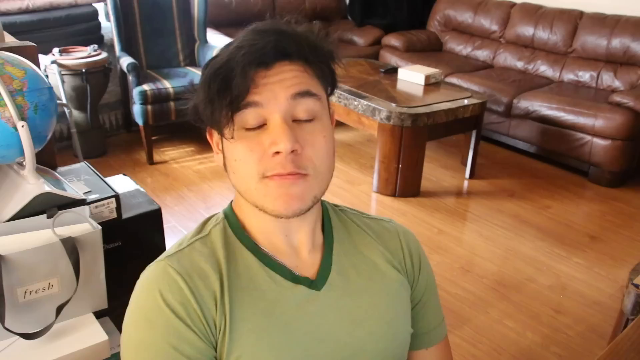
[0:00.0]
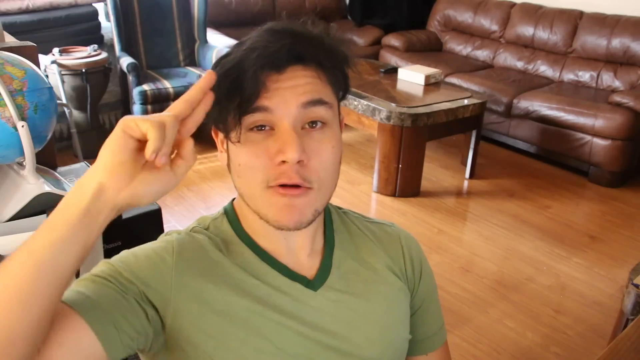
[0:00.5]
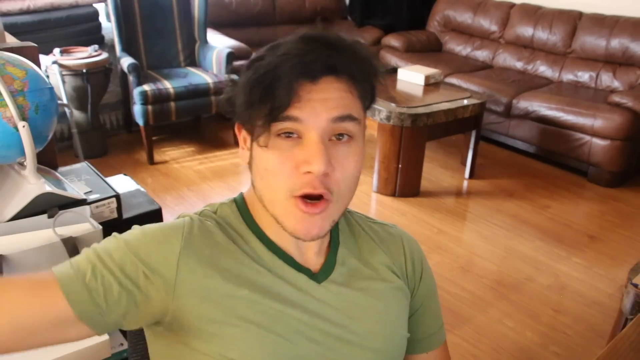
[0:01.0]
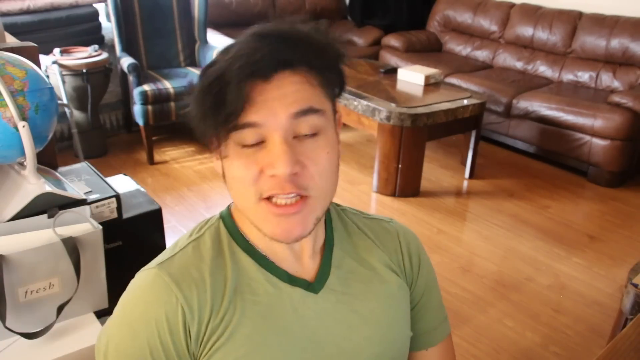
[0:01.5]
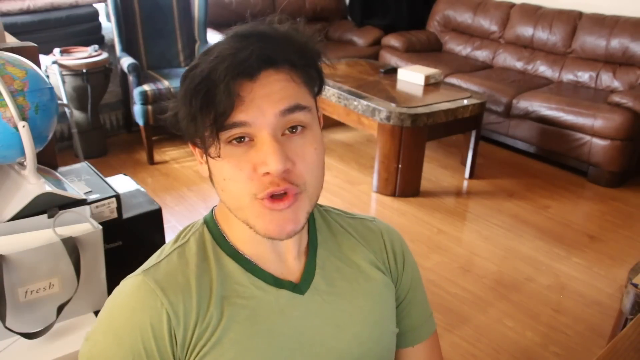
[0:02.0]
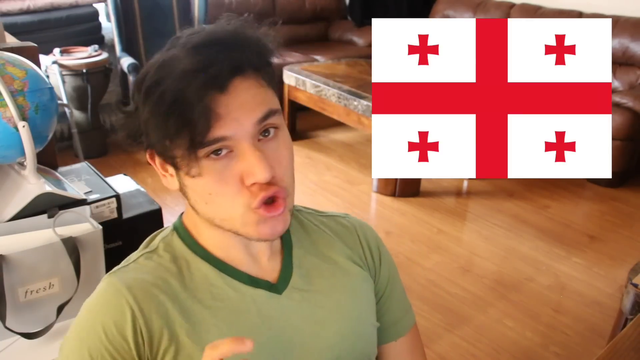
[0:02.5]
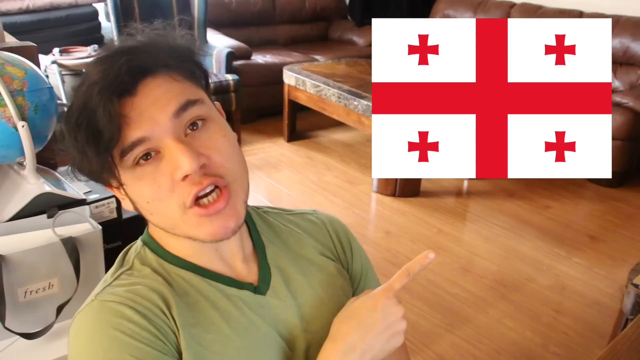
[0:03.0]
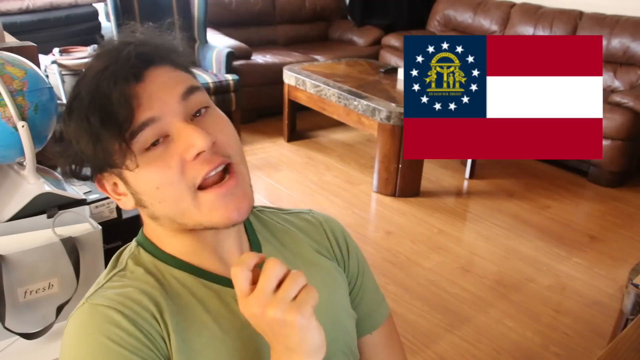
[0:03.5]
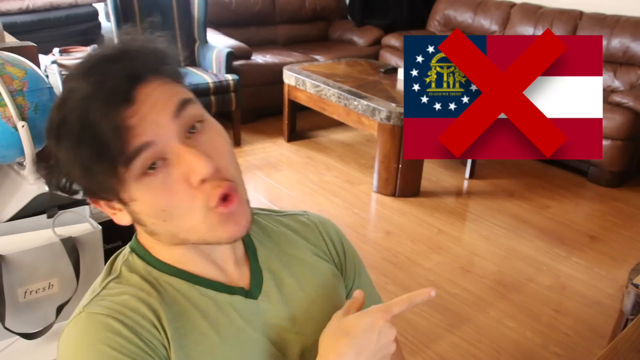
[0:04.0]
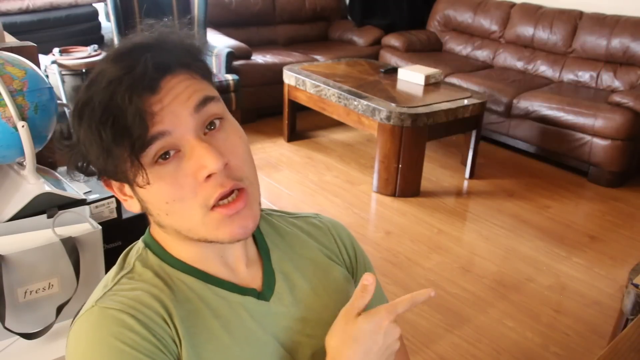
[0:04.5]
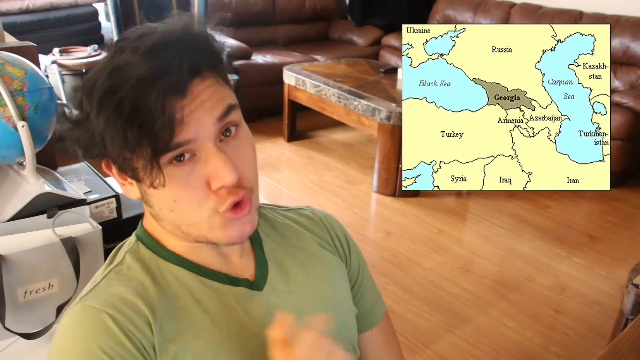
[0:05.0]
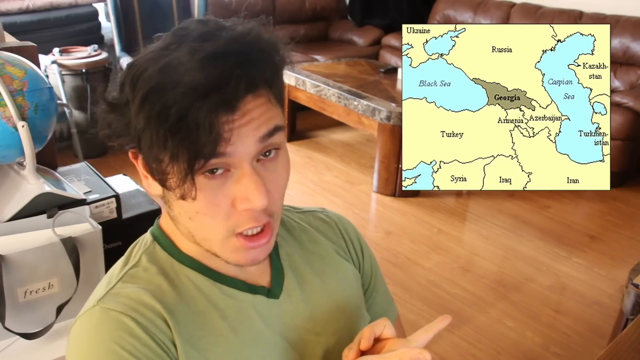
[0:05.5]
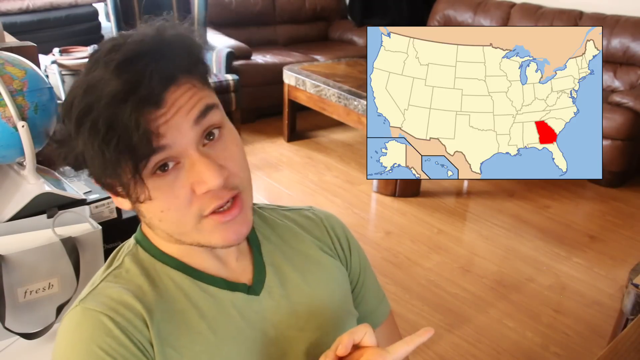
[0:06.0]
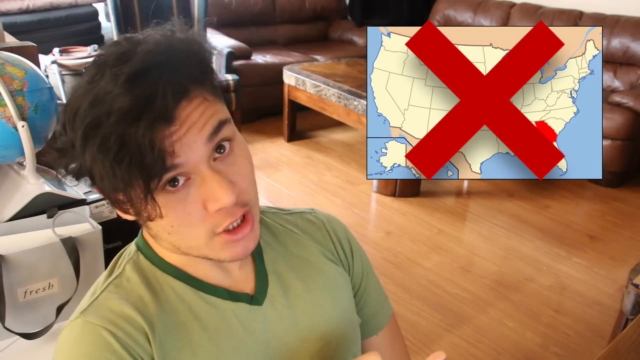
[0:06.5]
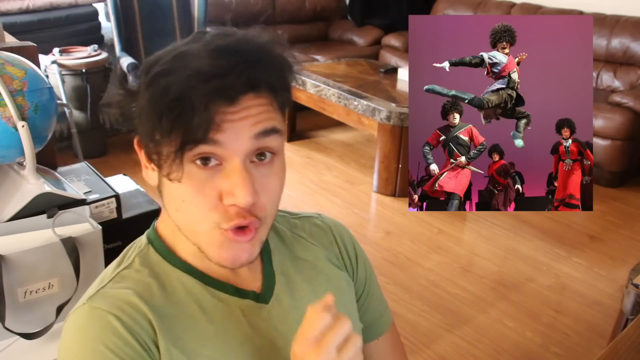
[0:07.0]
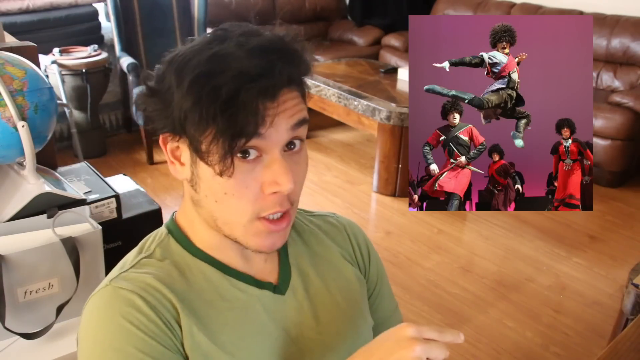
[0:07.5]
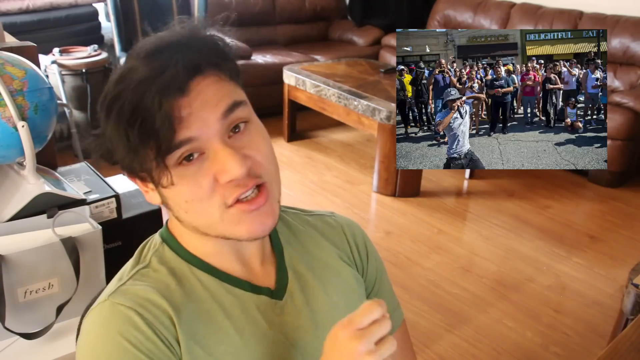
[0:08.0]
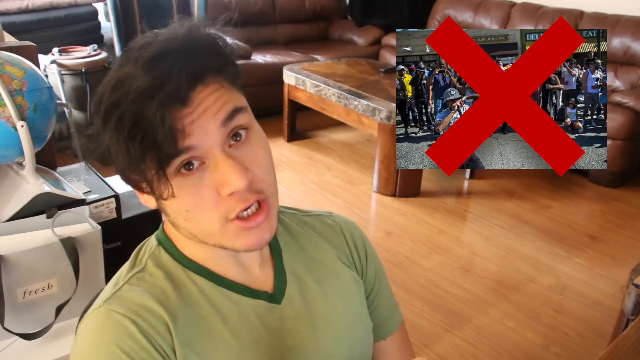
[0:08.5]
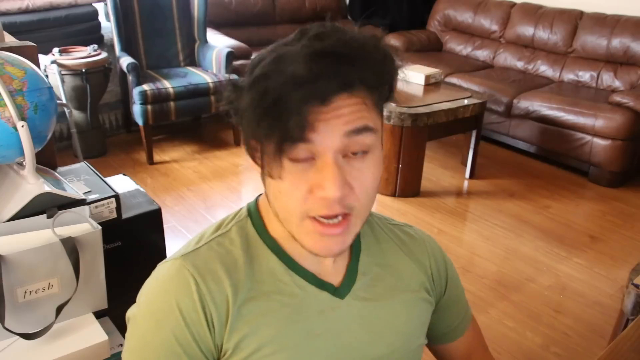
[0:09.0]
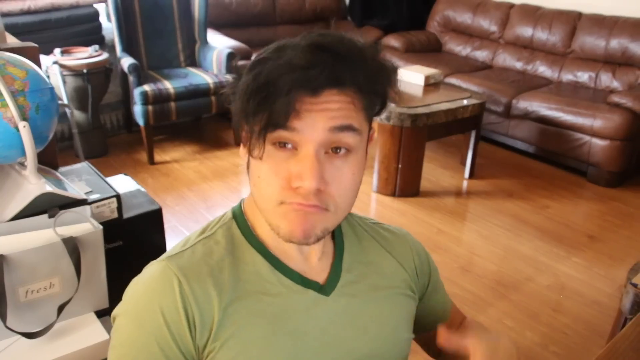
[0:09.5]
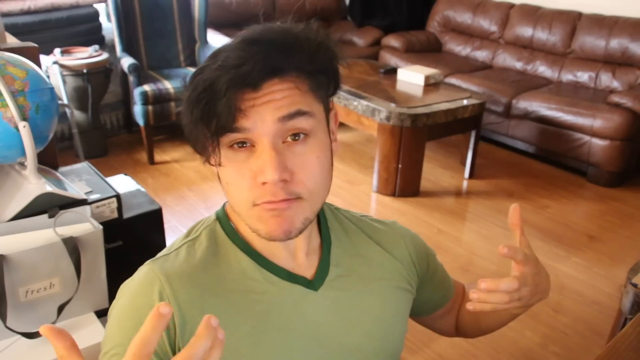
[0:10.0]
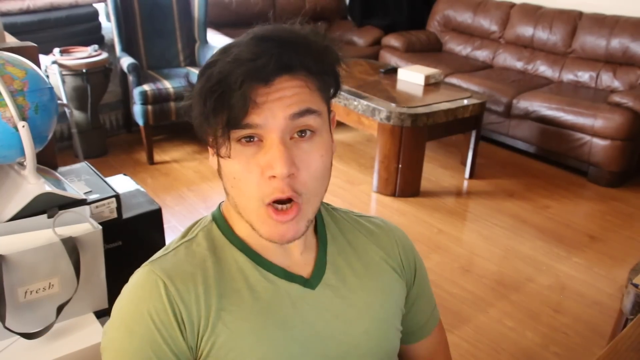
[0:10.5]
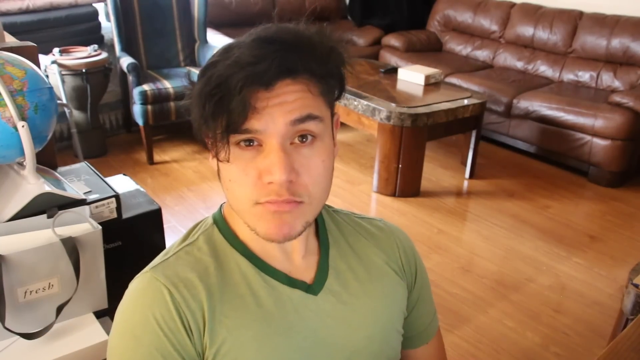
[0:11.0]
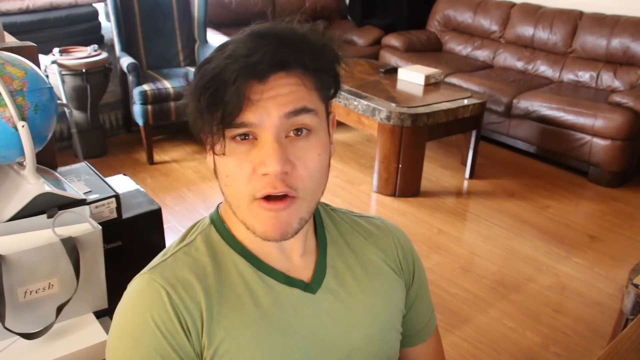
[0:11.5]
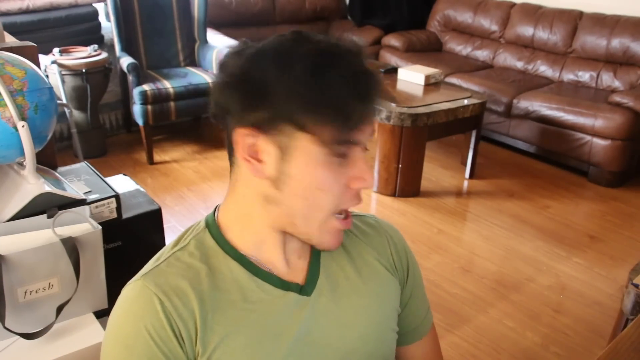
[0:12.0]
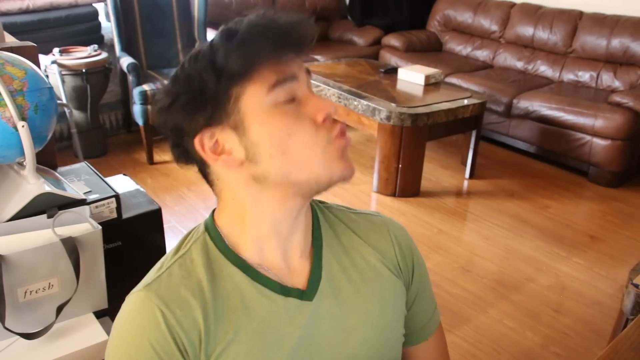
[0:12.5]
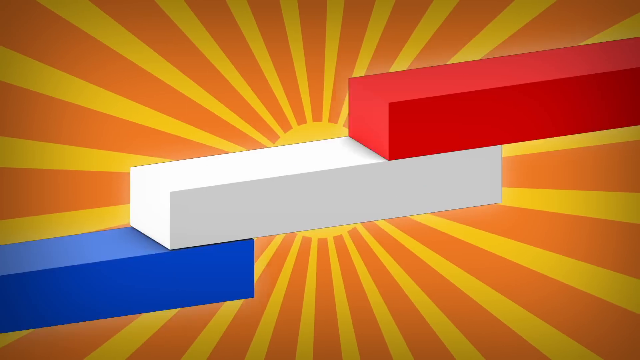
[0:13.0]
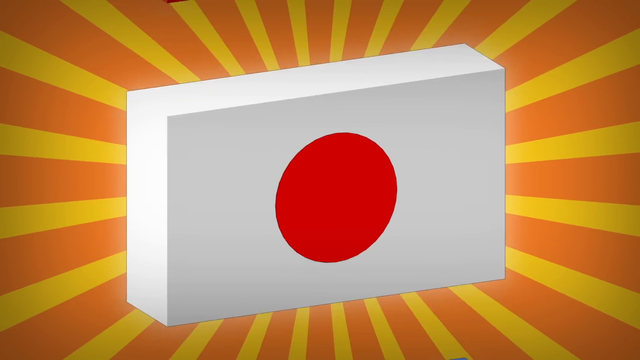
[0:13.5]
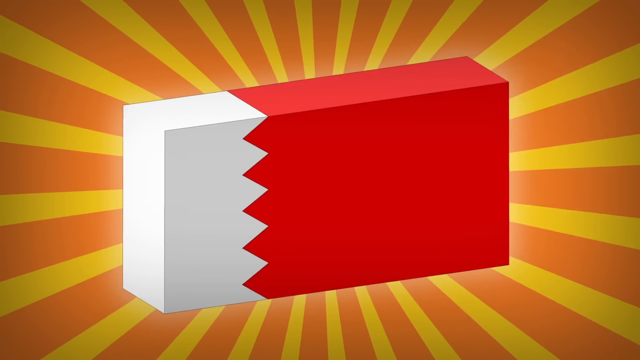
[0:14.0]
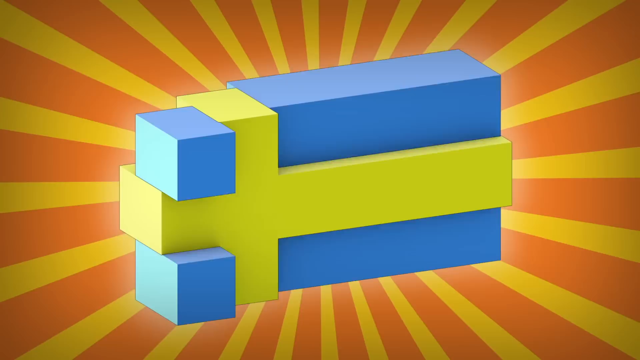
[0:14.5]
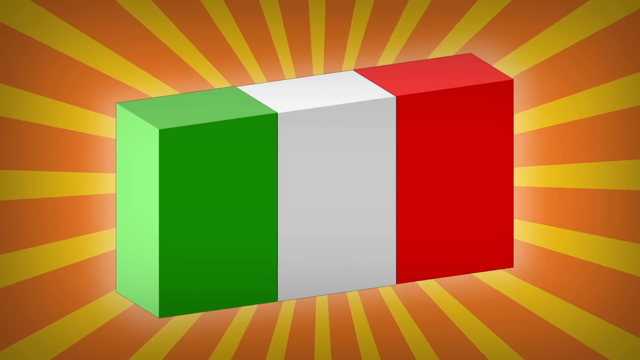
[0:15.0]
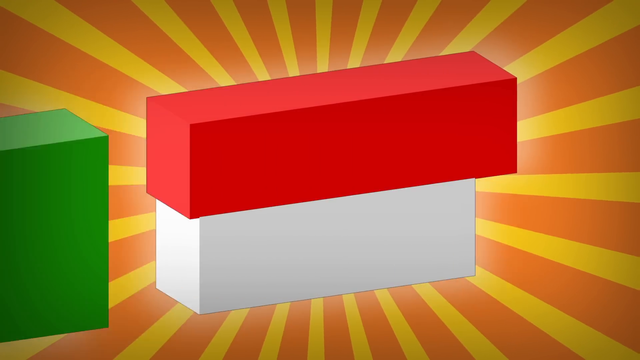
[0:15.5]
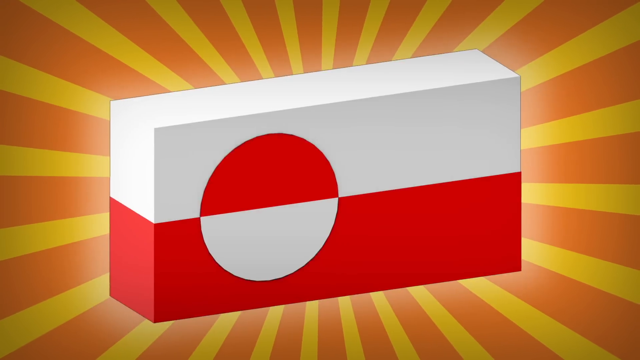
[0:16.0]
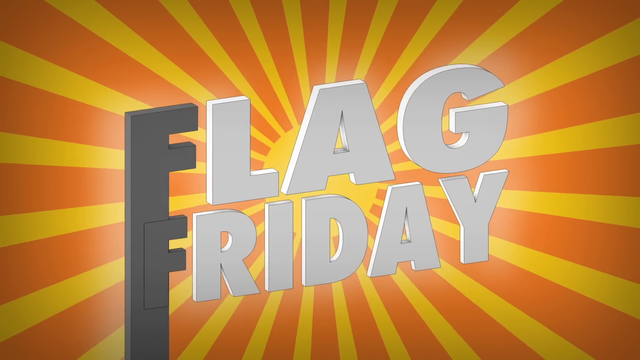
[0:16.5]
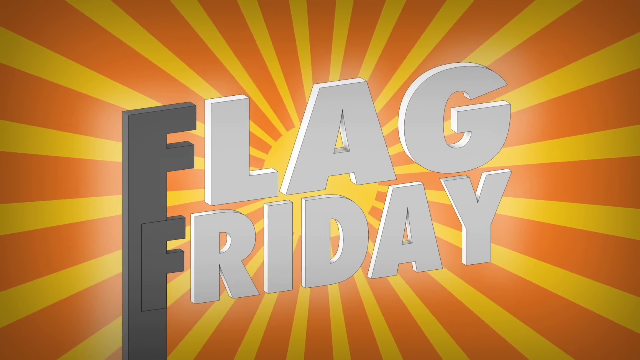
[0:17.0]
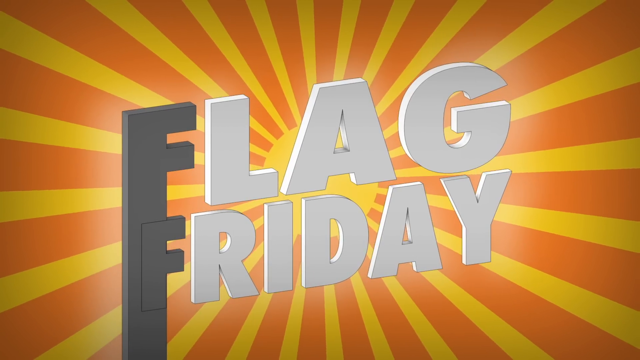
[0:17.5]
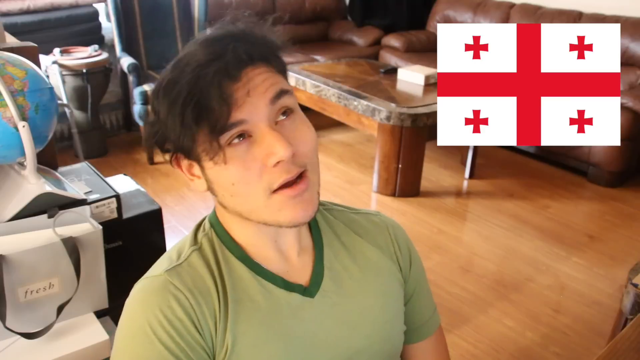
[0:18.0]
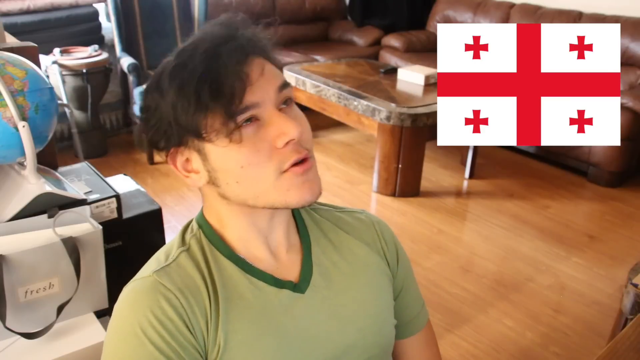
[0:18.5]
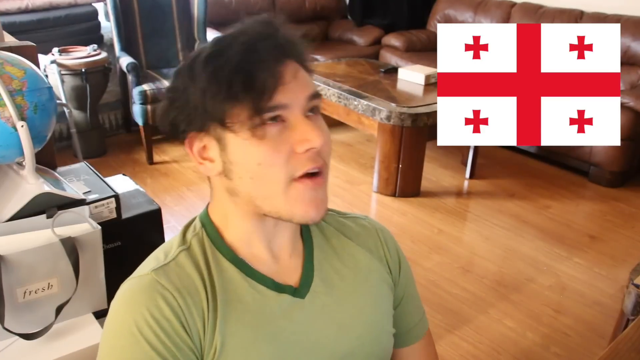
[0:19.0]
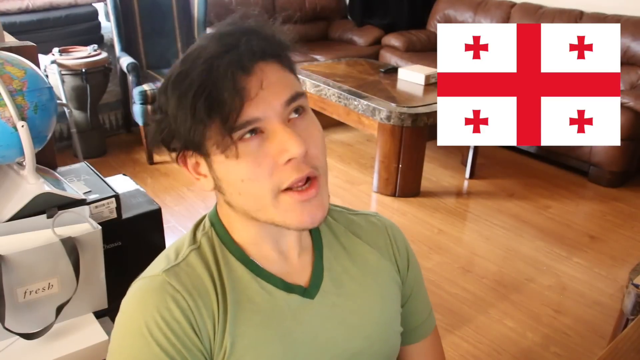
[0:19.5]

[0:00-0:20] A man who looks to be of Asian origin, apparently between 20 and 35 years old, wears what appears to be a greenish t-shirt and talks. Behind him is a room with brown leather sofas, a coffee table, a greenish chair with blue and brownish colors, a blue world globe, and what appears to be a workstation with books. As the man talks, flags of what seem to be different countries appear on the screen, and then other pictures with a red X on them appear on the right side.